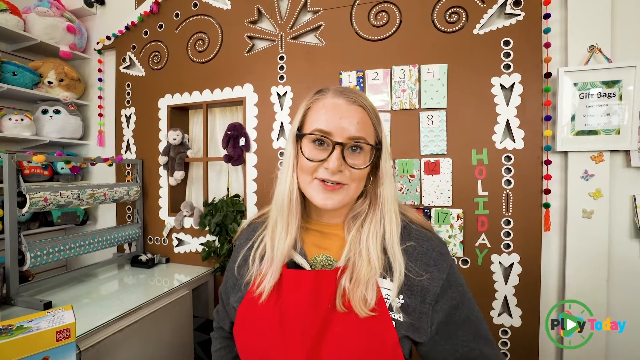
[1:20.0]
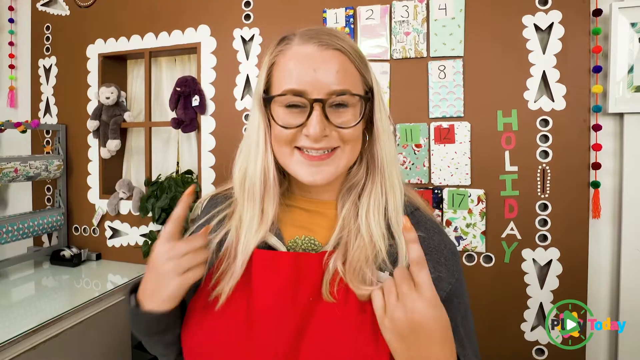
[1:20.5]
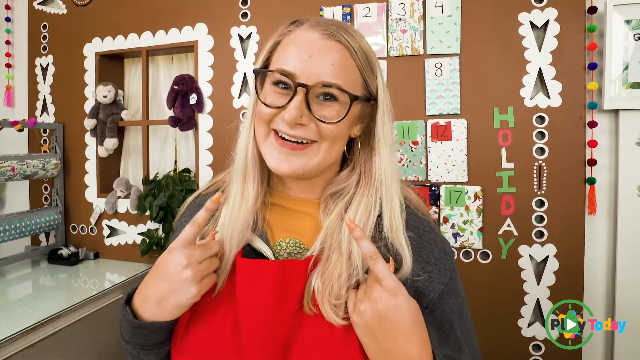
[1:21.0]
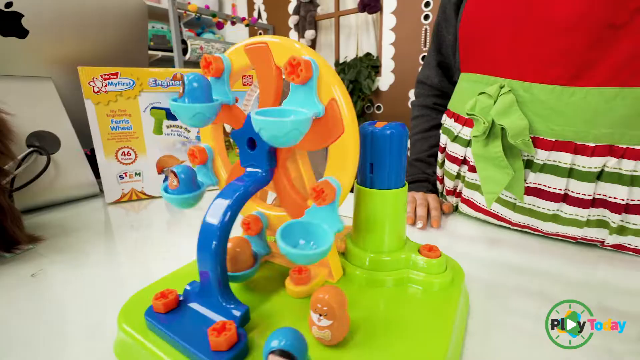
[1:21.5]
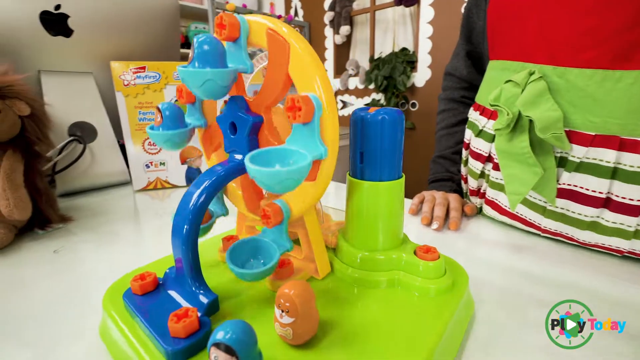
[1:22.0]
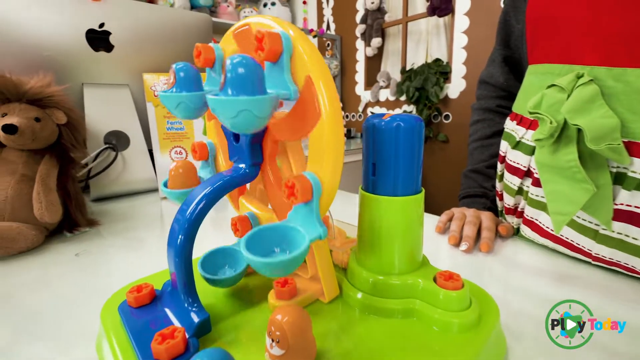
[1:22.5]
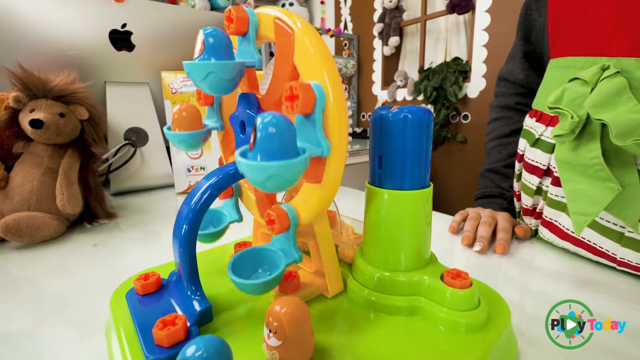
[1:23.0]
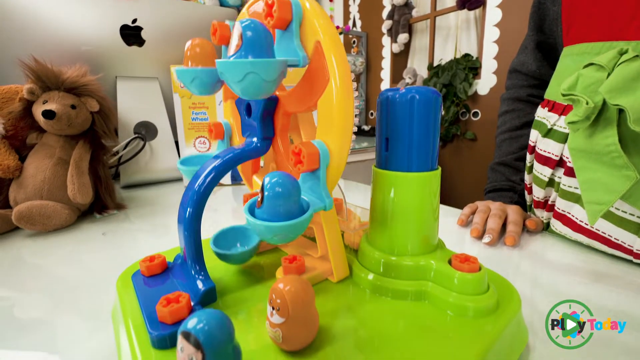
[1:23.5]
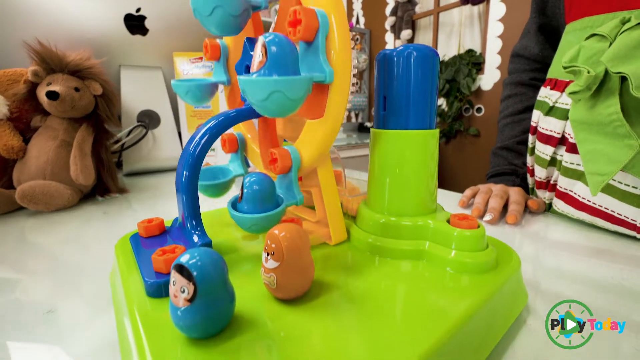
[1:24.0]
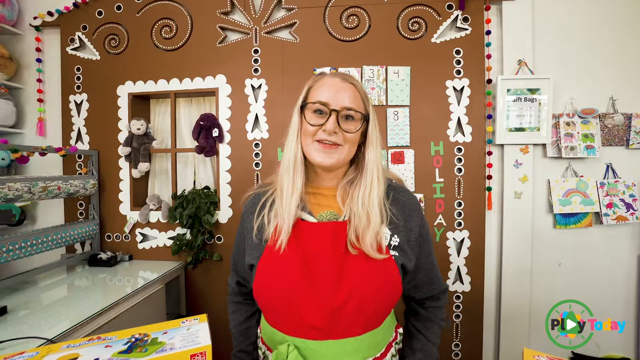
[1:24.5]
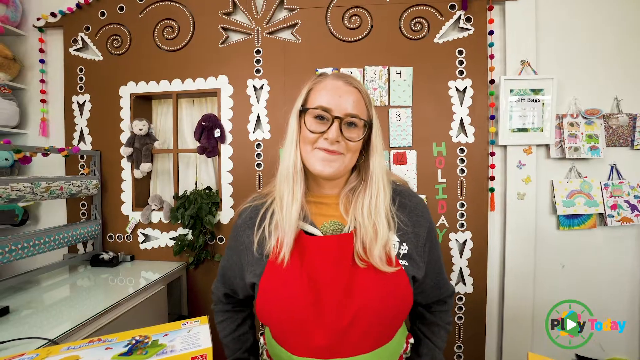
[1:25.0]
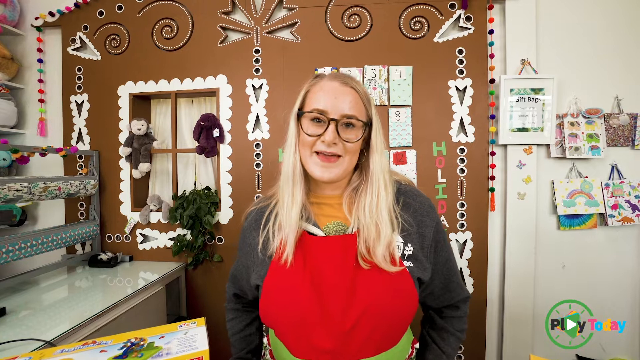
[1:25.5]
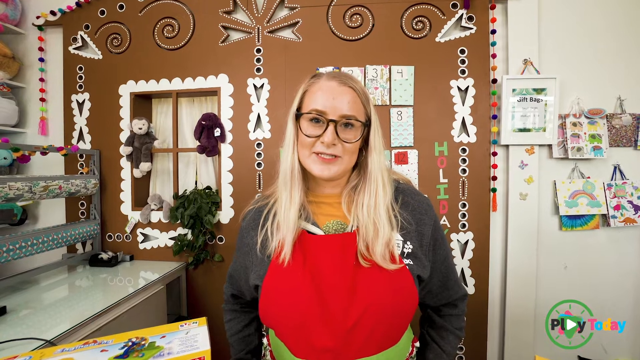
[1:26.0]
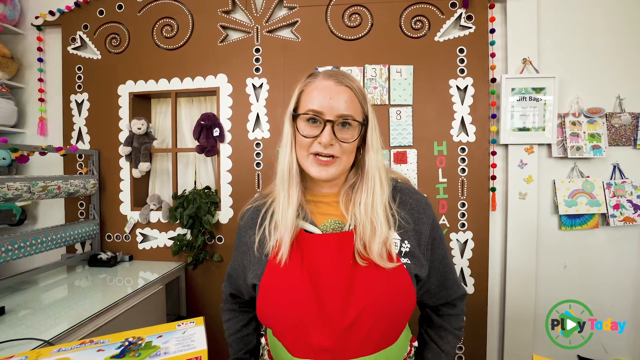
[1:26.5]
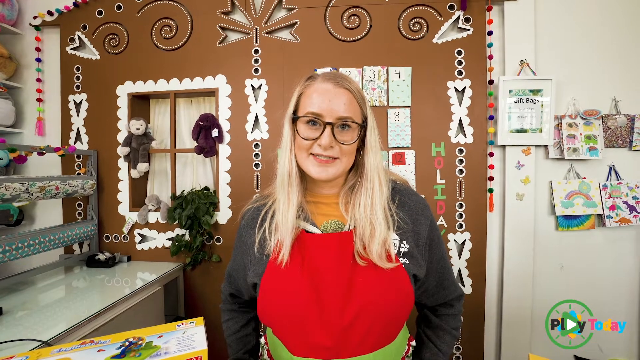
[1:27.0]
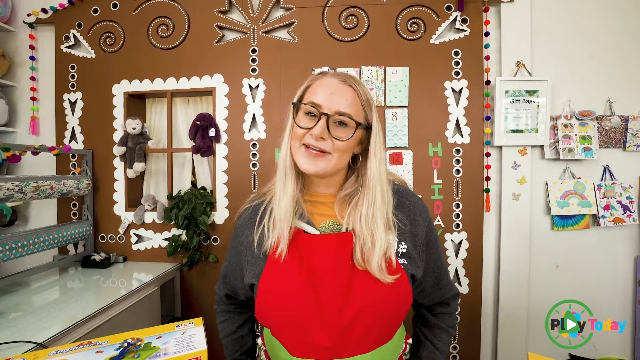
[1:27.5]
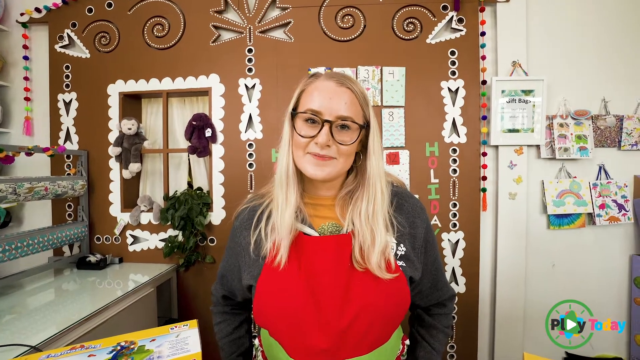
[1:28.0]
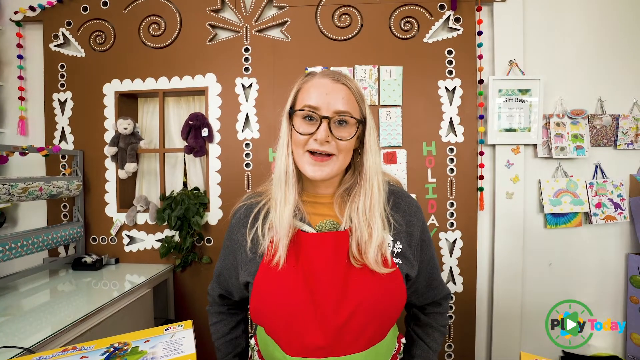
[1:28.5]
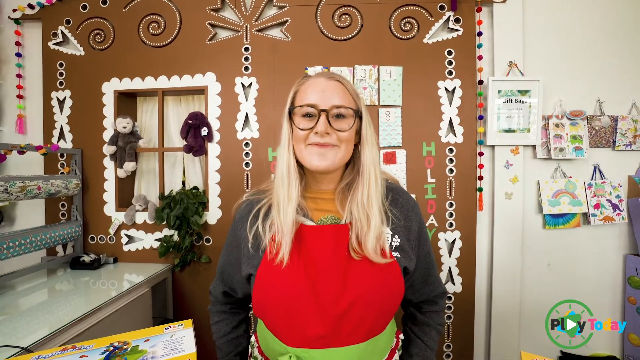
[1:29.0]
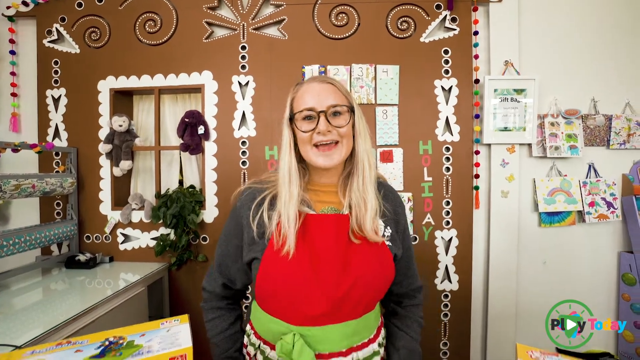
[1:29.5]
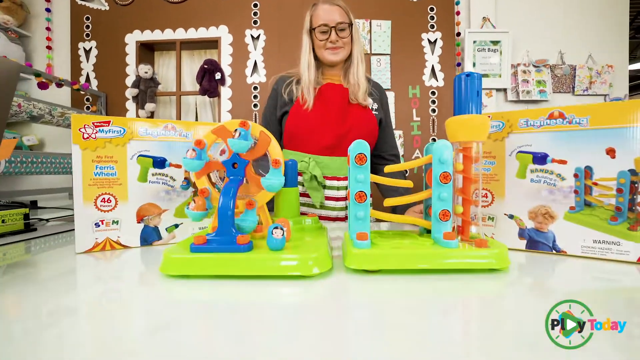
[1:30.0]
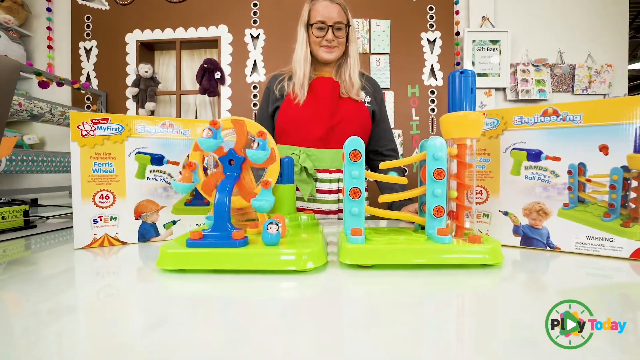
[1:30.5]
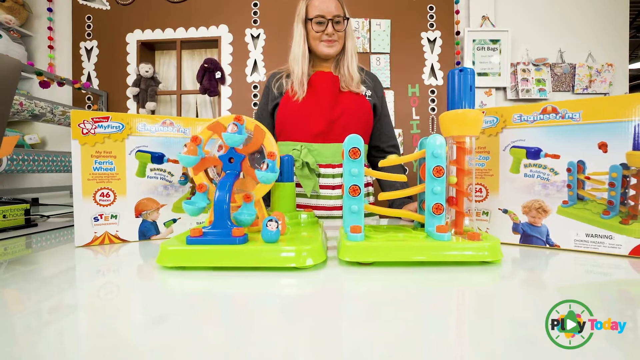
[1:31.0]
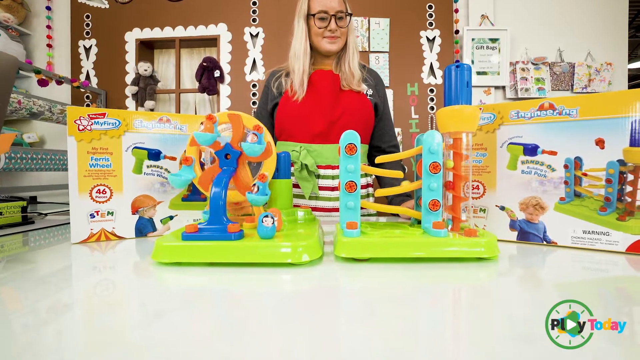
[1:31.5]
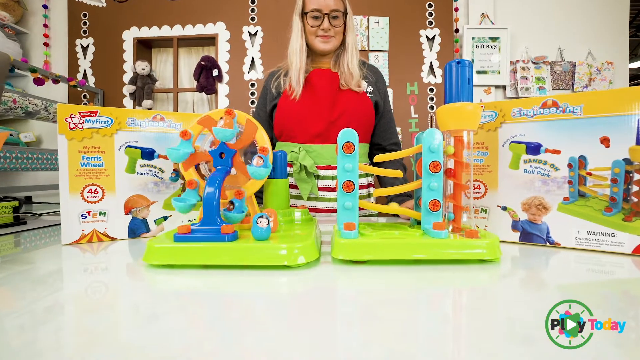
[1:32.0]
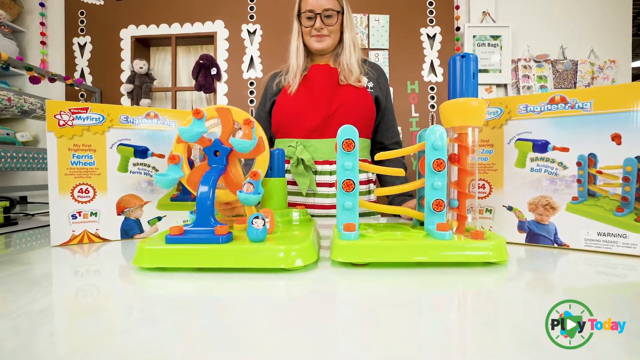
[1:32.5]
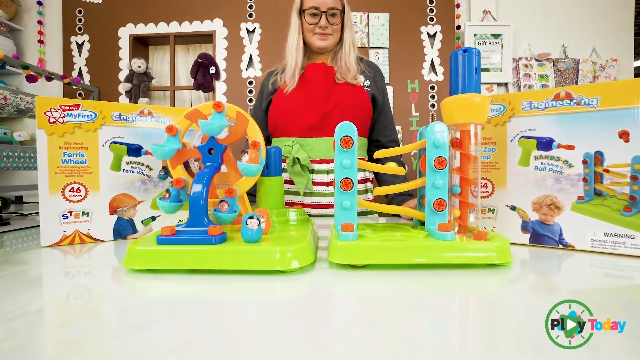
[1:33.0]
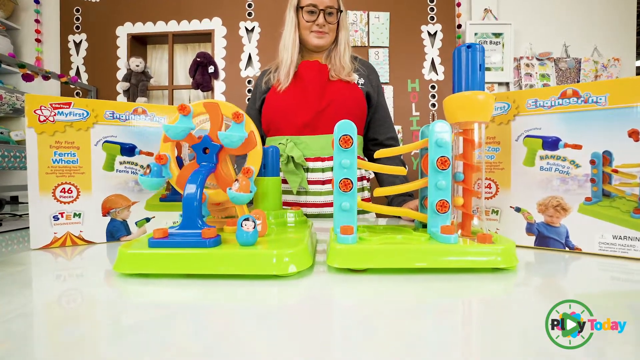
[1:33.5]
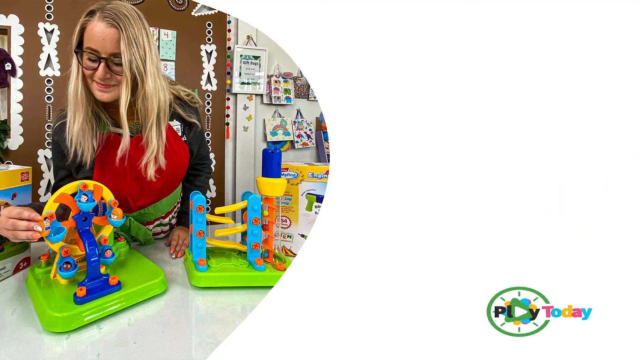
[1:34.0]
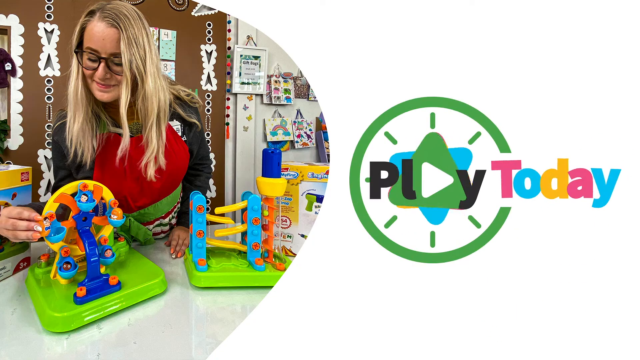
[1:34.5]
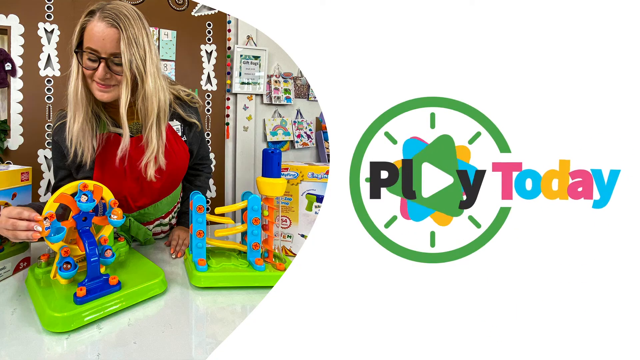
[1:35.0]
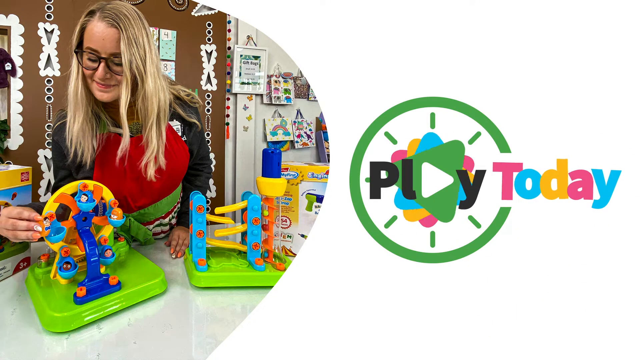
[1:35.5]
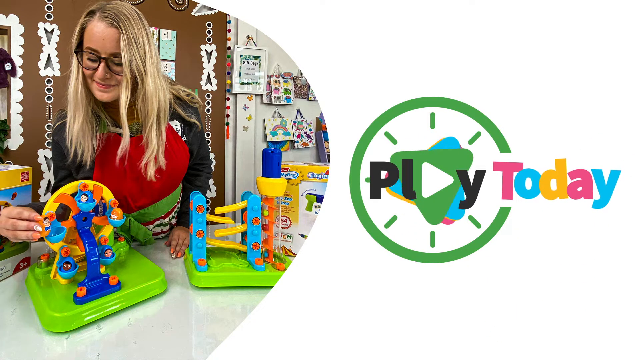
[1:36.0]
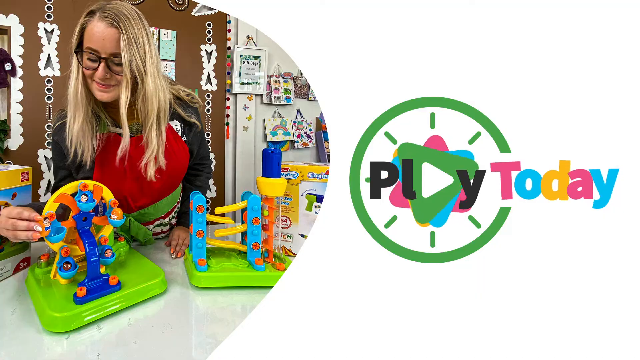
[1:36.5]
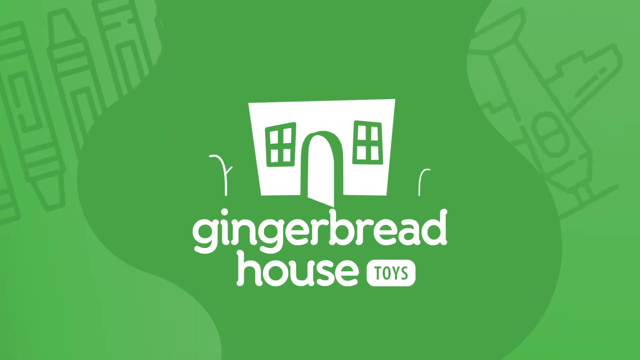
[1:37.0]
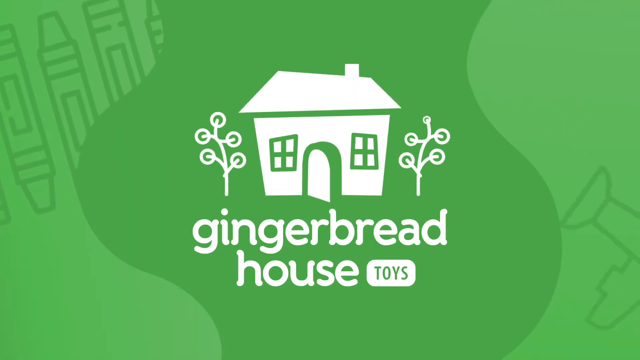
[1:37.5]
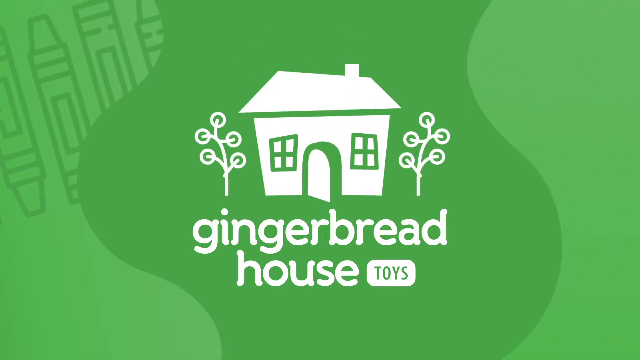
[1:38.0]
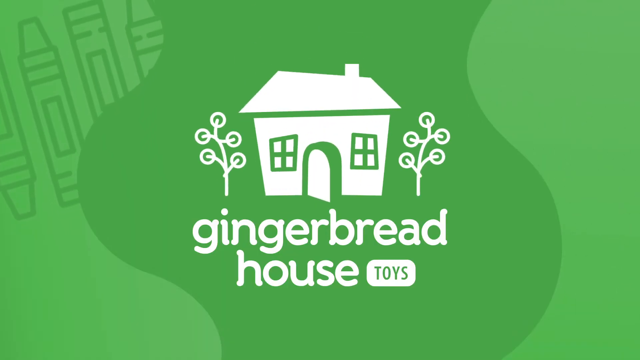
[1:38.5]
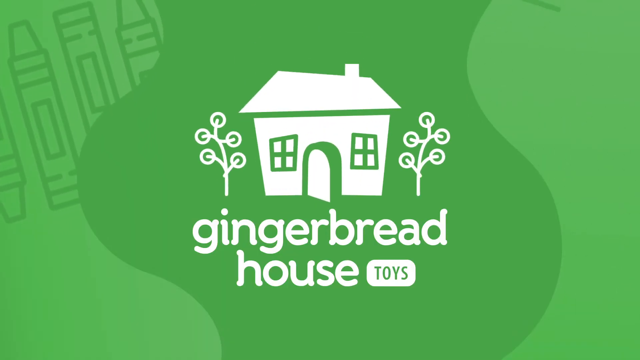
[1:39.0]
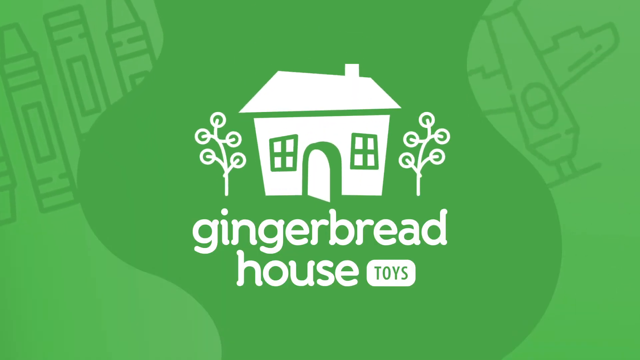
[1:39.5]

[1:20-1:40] The Caucasian woman is still behind the counter, showing an overall view of the toys she demonstrated earlier. She is the only person present, and toys surround her all over the shop.